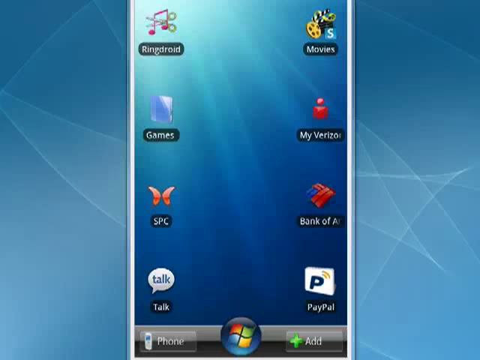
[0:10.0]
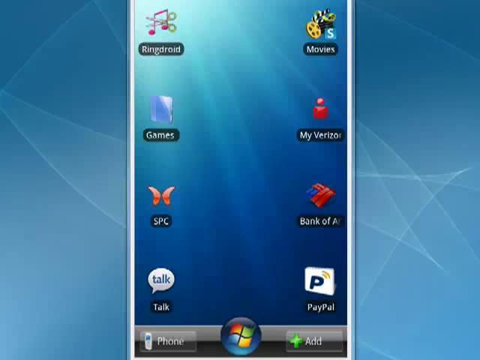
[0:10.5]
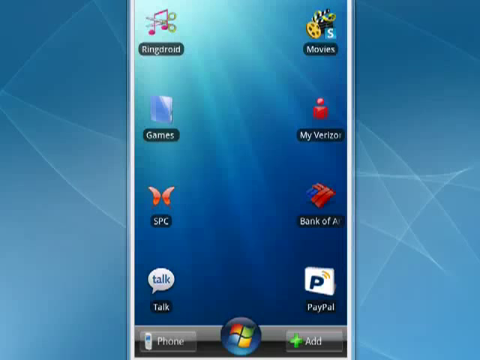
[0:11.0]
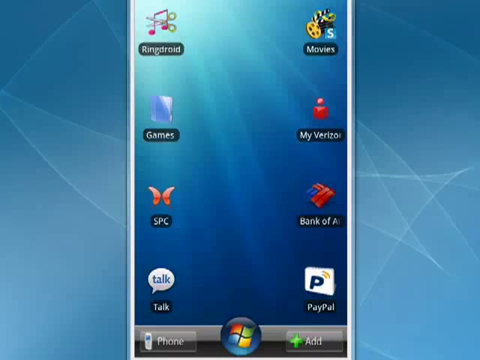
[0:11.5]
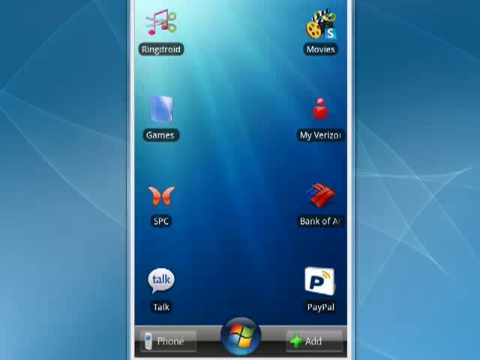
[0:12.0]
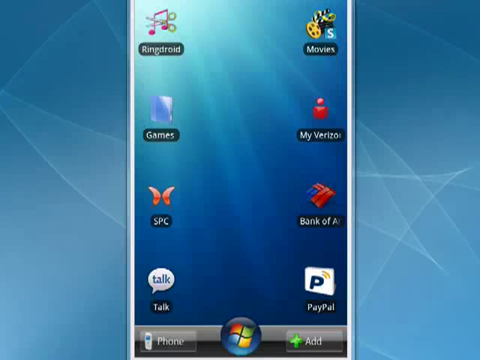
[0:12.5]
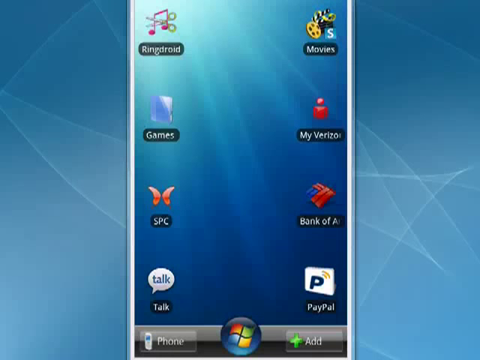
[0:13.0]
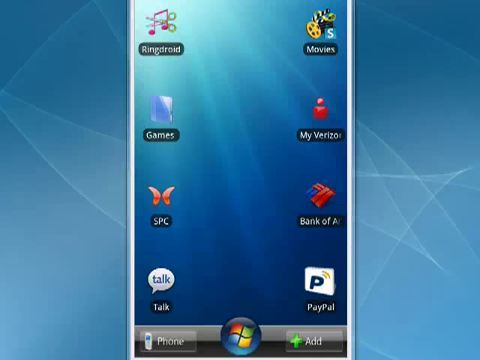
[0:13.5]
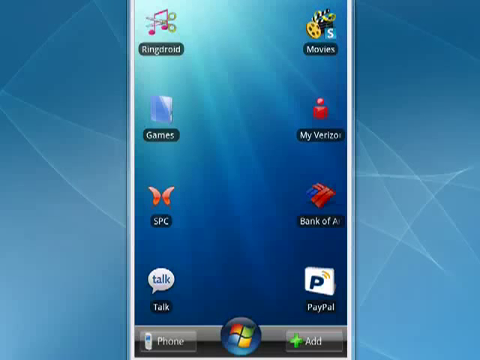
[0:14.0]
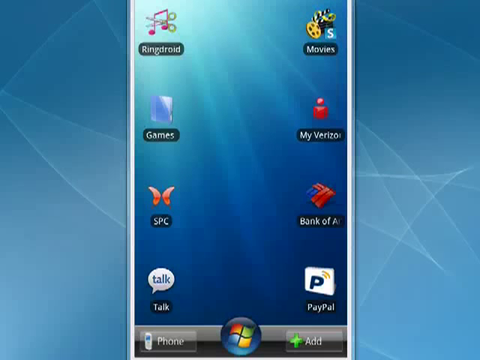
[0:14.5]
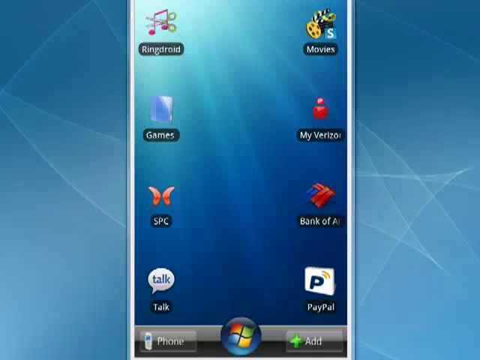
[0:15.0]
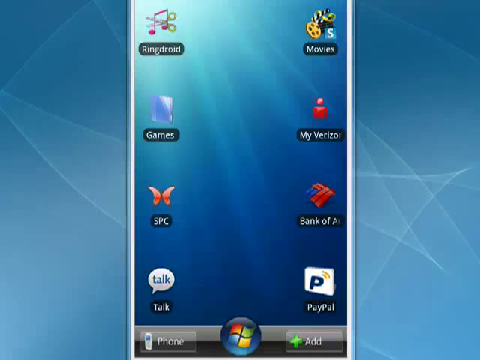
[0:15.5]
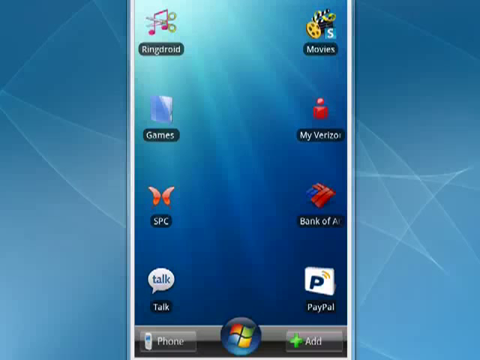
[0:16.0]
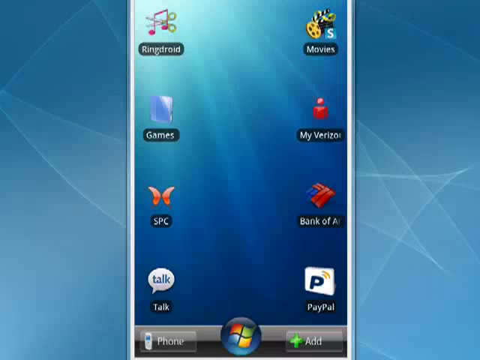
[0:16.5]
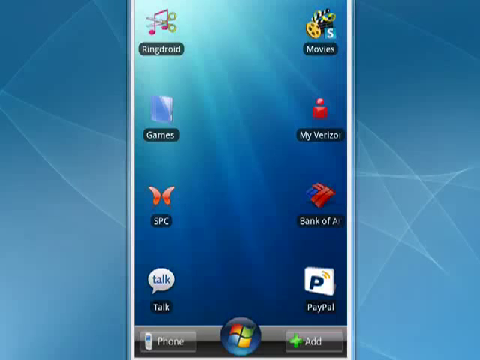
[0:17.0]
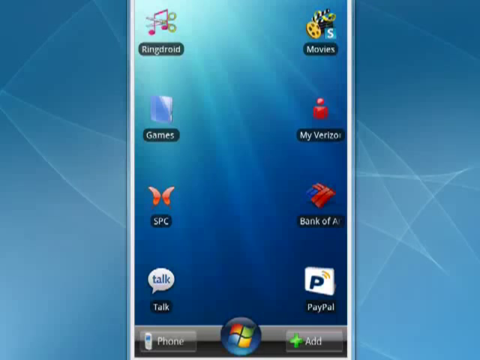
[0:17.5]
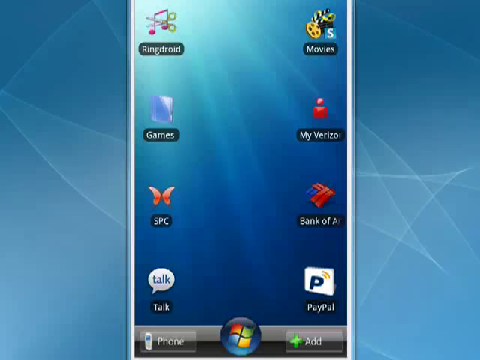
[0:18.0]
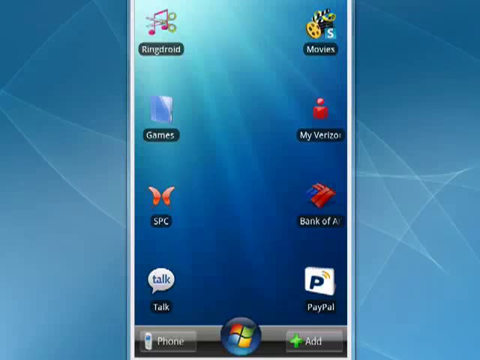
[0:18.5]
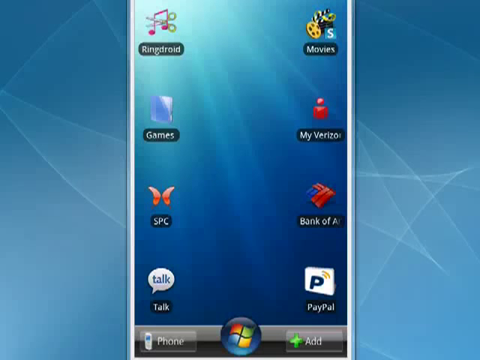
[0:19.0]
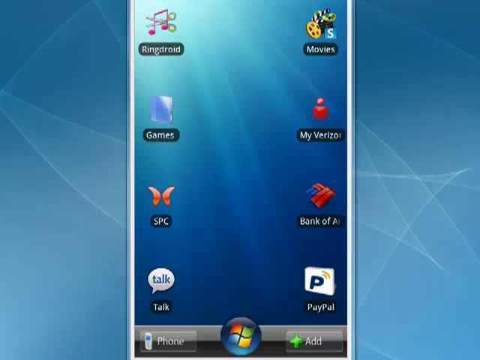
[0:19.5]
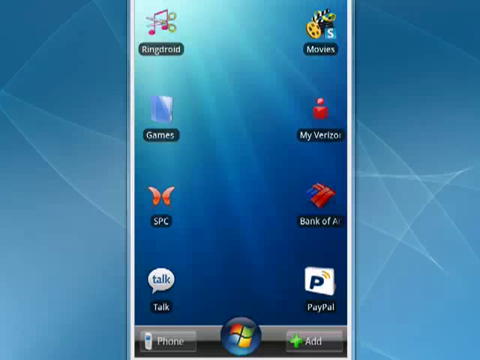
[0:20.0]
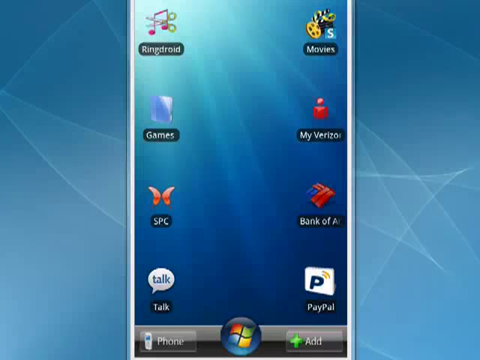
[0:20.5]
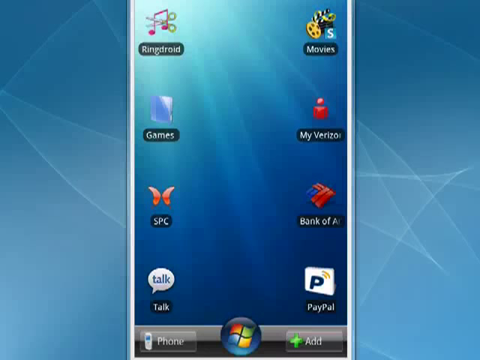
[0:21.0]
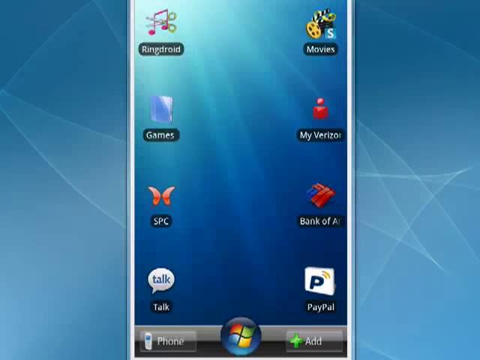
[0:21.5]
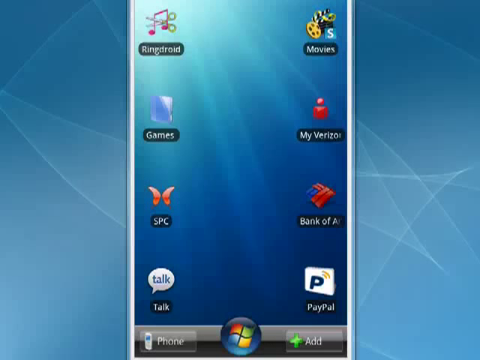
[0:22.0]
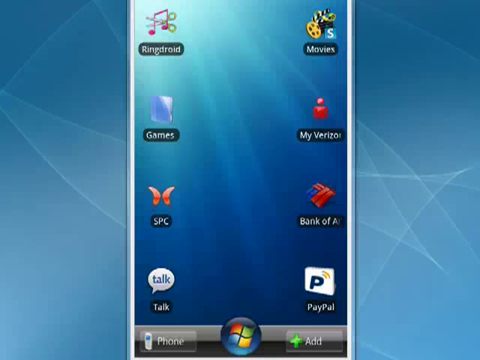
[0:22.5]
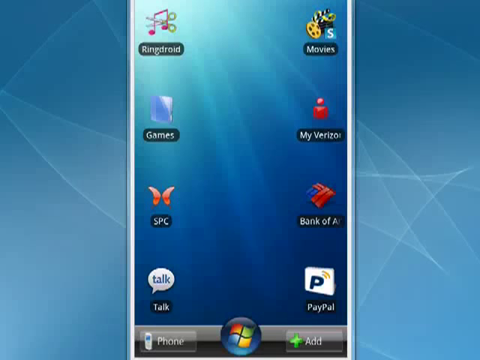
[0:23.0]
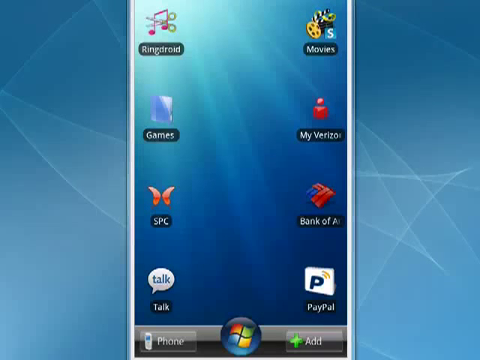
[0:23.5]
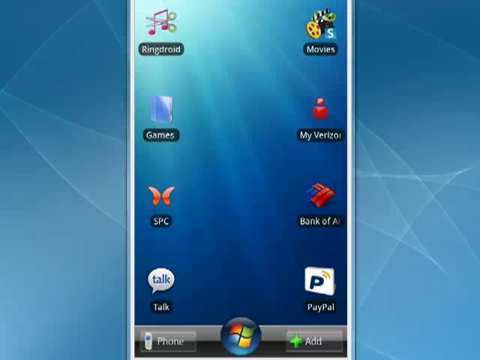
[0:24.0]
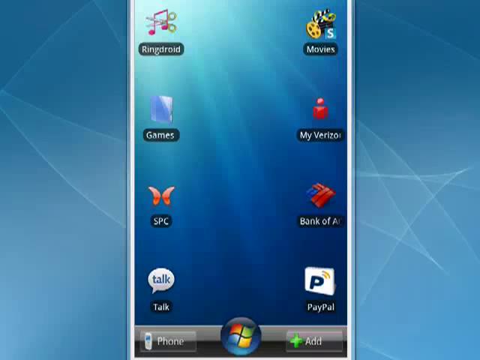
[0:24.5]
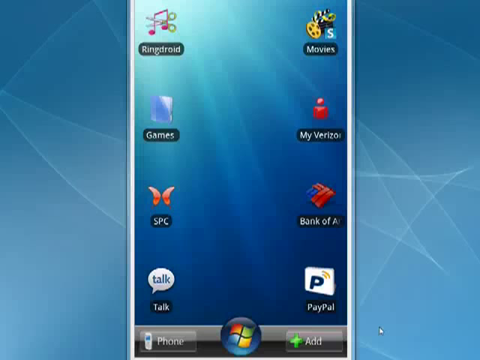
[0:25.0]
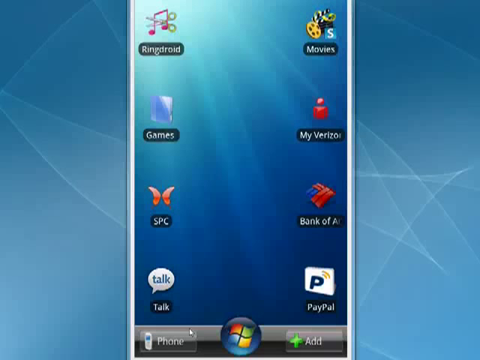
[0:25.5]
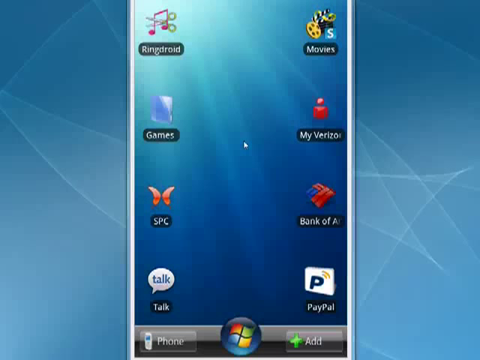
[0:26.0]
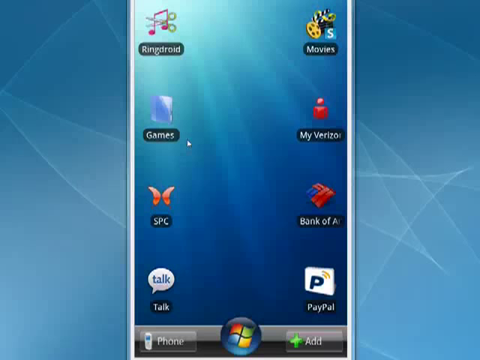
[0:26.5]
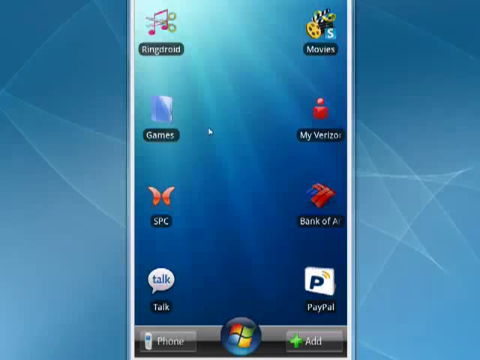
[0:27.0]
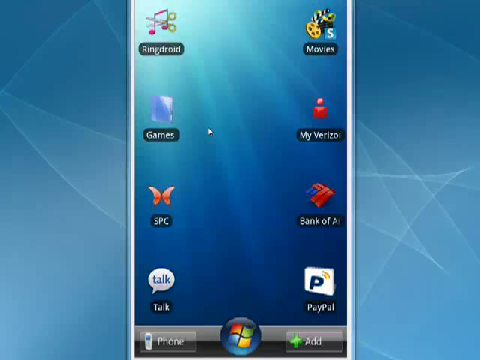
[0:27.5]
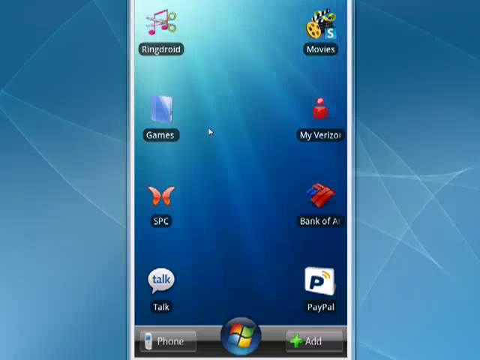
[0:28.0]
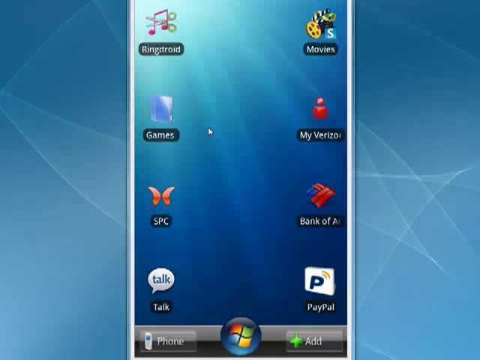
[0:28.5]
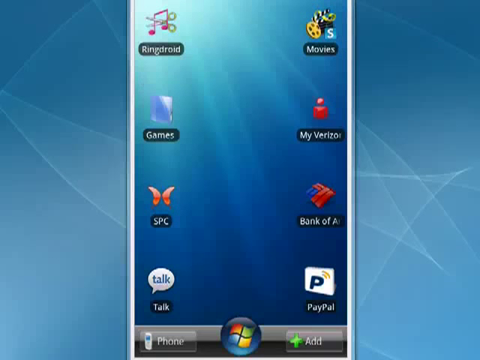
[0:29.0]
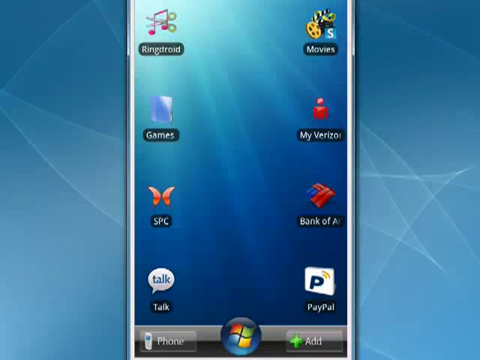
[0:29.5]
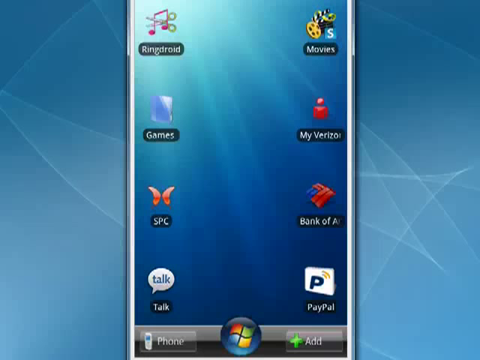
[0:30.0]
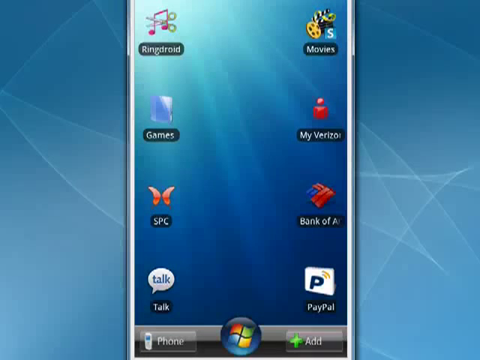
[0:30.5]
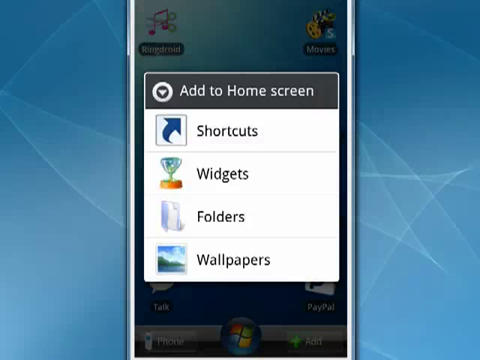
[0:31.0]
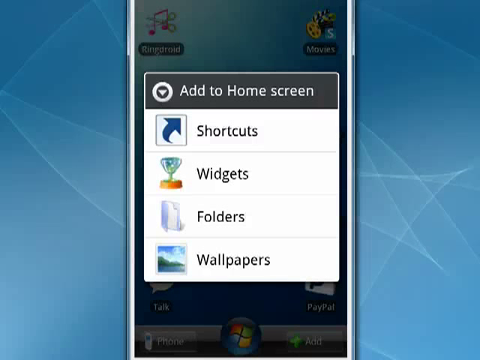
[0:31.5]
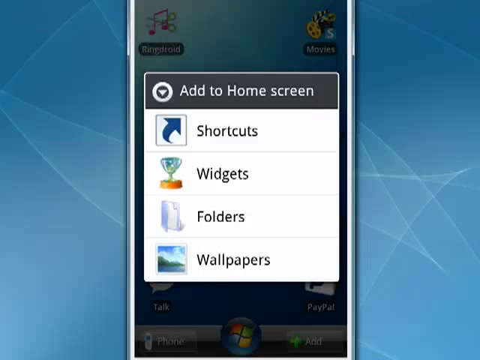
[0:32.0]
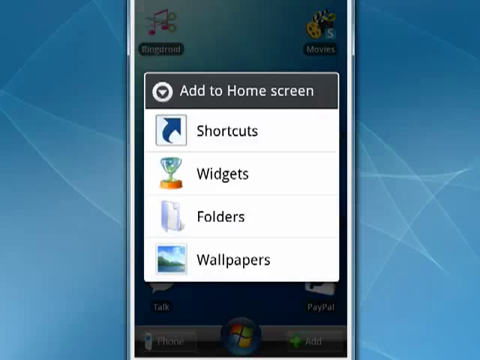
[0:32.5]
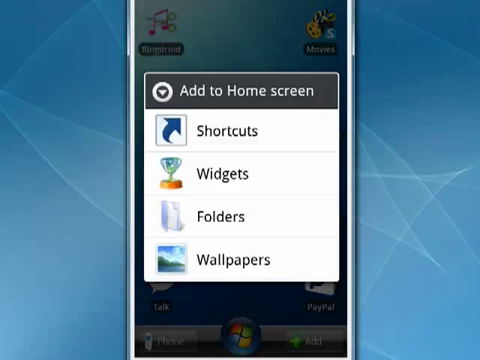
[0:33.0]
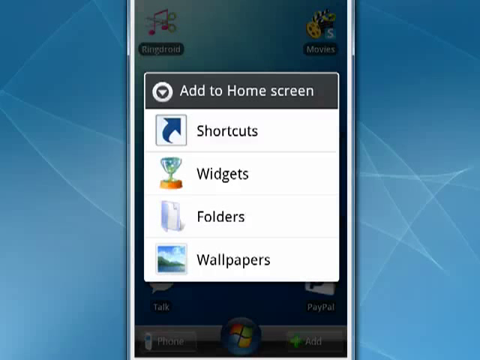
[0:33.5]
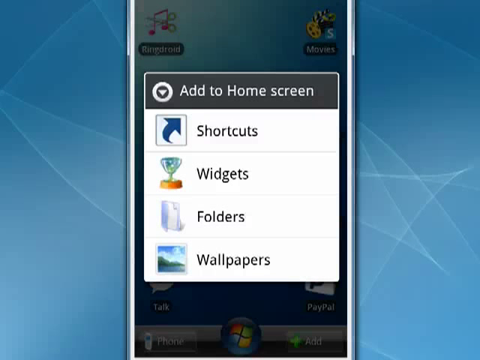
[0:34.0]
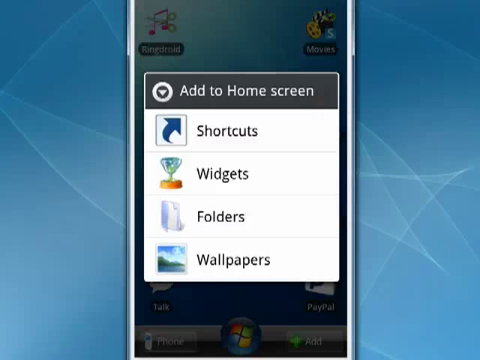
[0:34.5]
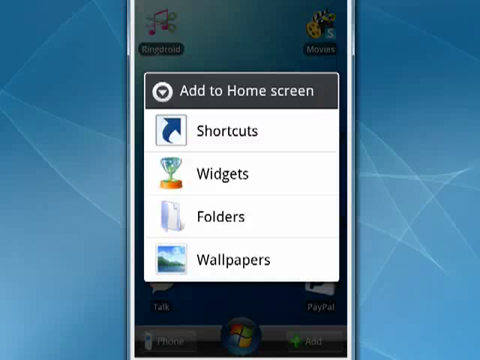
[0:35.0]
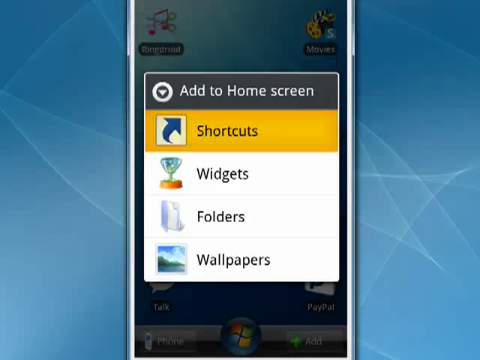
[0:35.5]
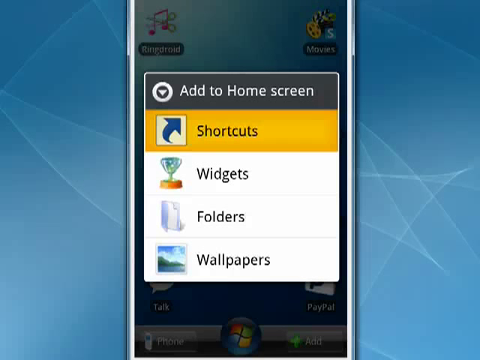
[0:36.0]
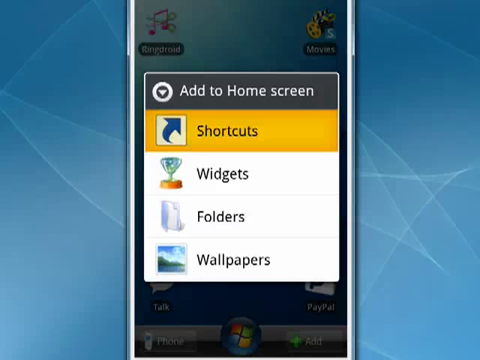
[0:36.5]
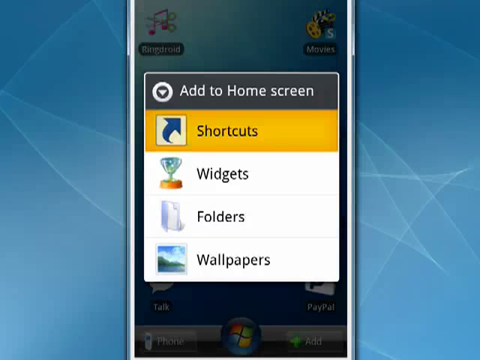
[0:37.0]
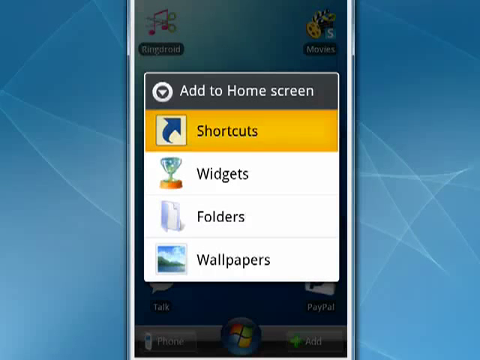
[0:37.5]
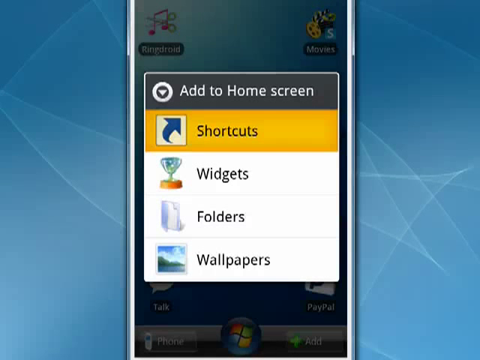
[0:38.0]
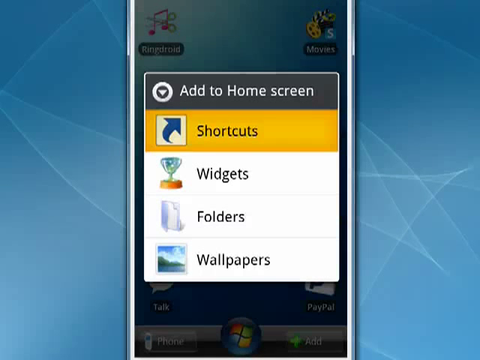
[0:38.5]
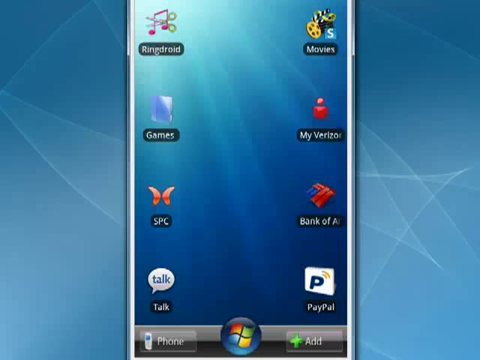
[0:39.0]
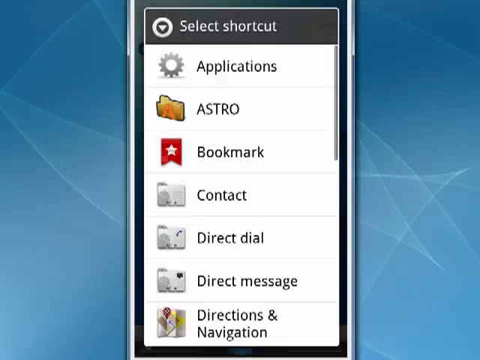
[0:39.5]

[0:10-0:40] An Android phone is in the center of a blue background. Its thumbnails read "Ringdroid" with a pink musical note and green scissors, "Games" with a blue tablet, "SPC" with an orange-red butterfly, "Talk" with a speech bubble that says "talk," "Movies" with a yellow and black reel and cut sign, "My Verizon" with a red person icon, "Bank of America" with a red and blue flag-like logo, and "PayPal" with a white rectangle bearing a P with a yellow signal coming from it. At the bottom left is the word "Phone" with a phone icon, and at the bottom right is the word "Add" with a green plus icon. The mouse hovers over Games. A menu titled "Add to Home Screen" comes up with four buttons underneath: Shortcuts, Widgets, Folders and Wallpapers. Shortcuts is selected in yellow. Afterwards a menu titled "Select shortcut" comes up, listing from top to bottom "Applications," "ASTRO," "Bookmark," "Contact," "Direct Dial," "Direct message" and "Directions & Navigation."